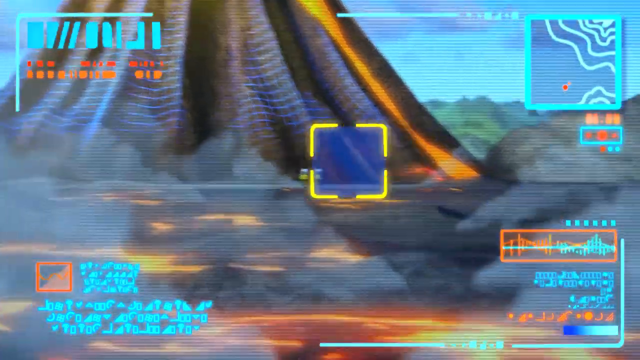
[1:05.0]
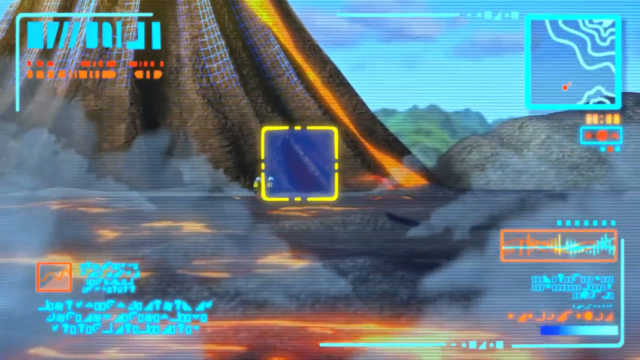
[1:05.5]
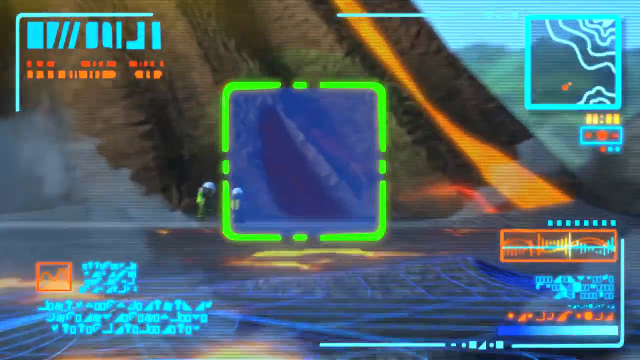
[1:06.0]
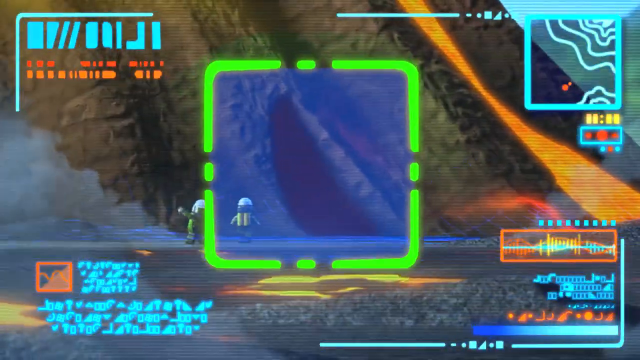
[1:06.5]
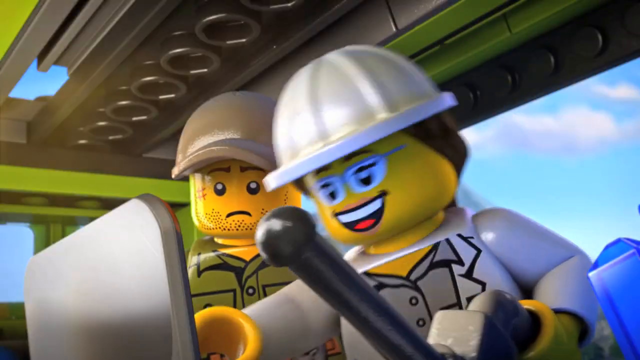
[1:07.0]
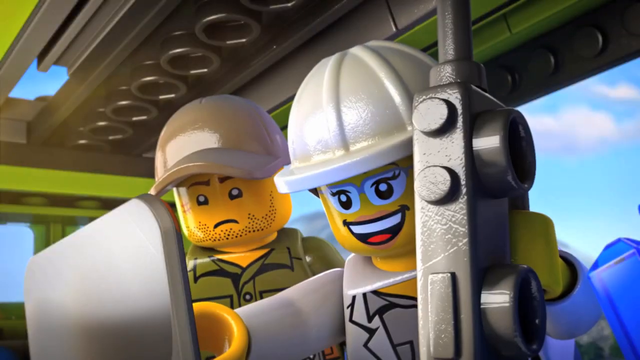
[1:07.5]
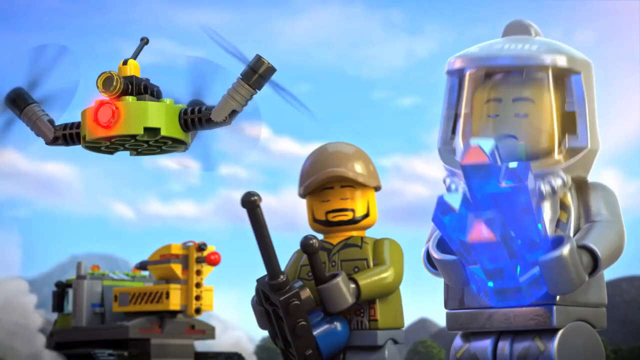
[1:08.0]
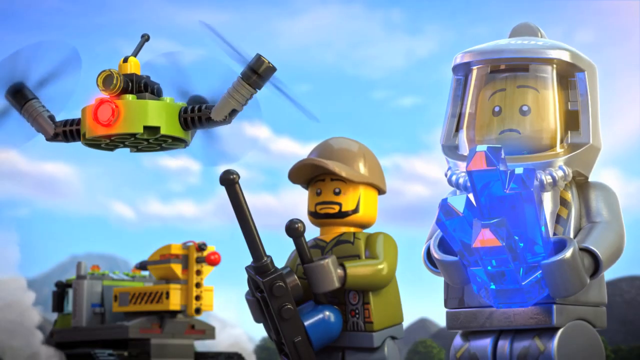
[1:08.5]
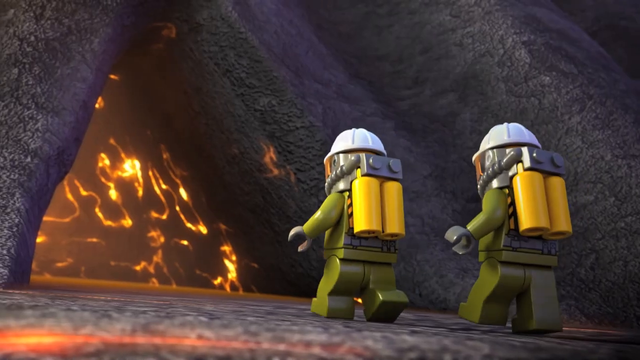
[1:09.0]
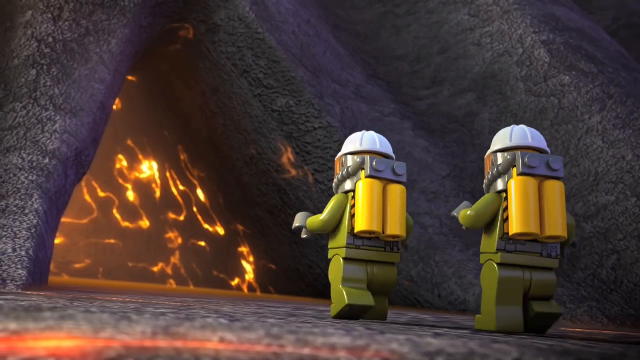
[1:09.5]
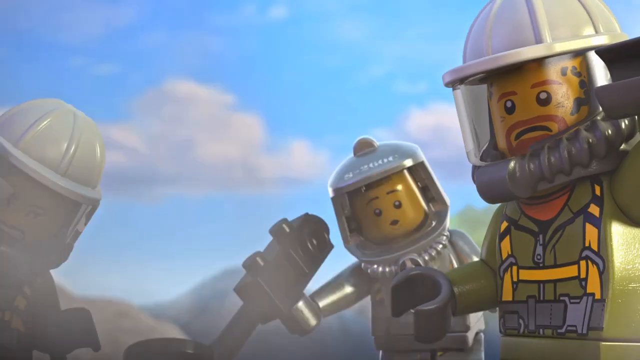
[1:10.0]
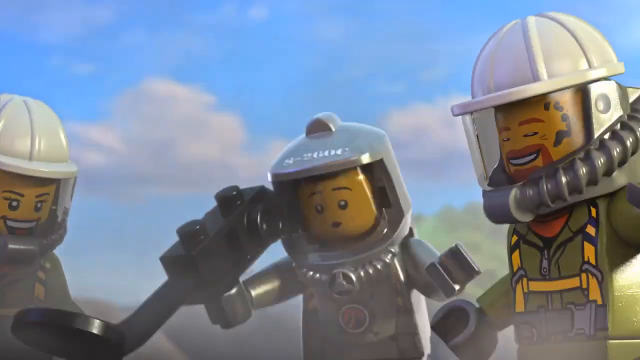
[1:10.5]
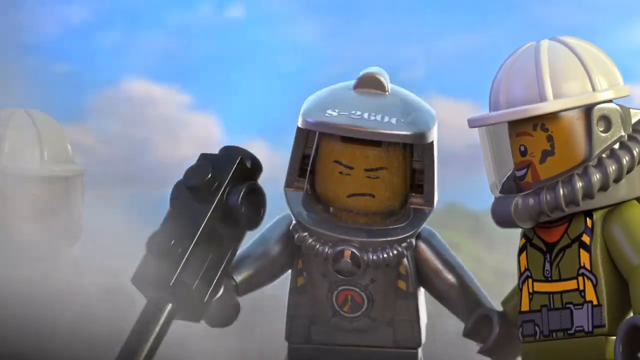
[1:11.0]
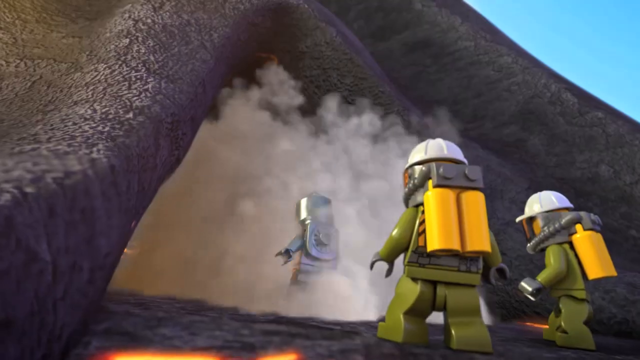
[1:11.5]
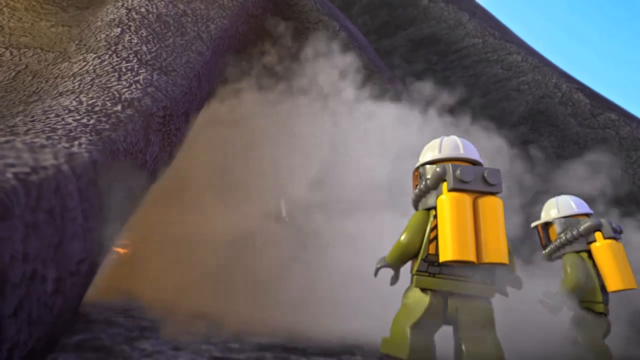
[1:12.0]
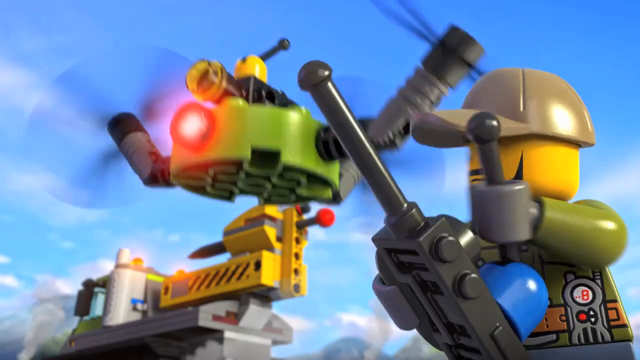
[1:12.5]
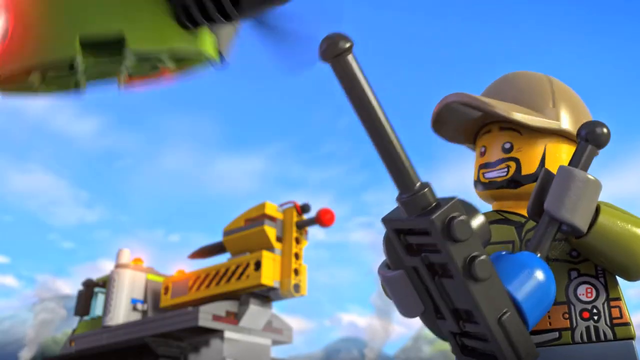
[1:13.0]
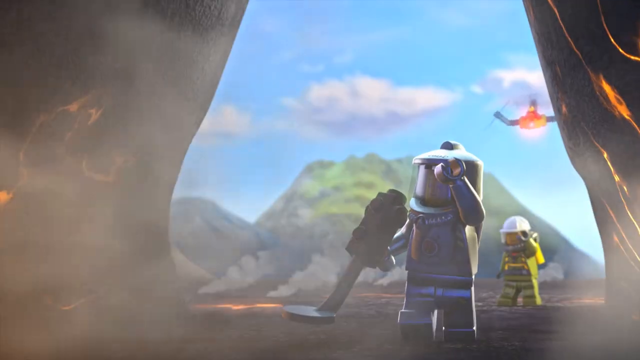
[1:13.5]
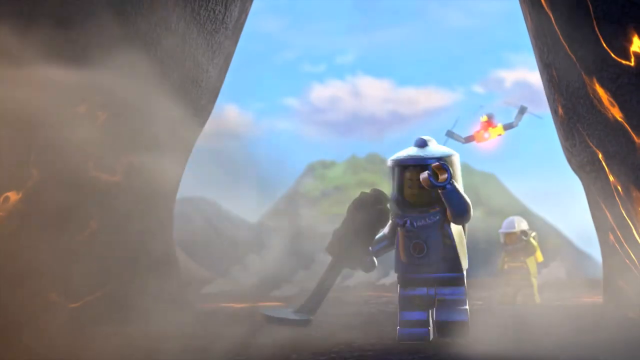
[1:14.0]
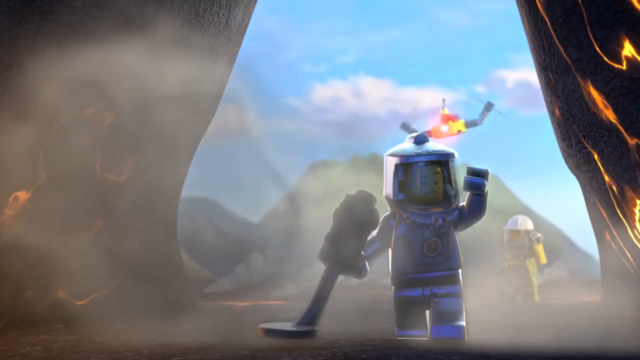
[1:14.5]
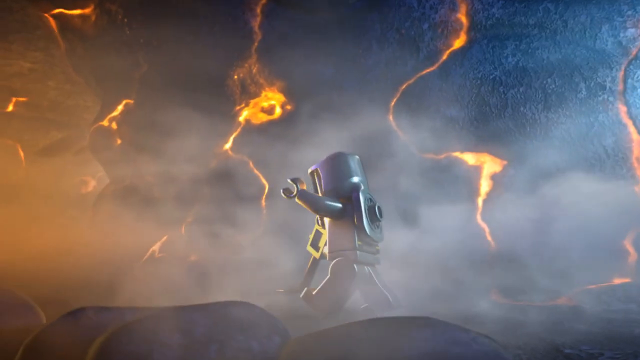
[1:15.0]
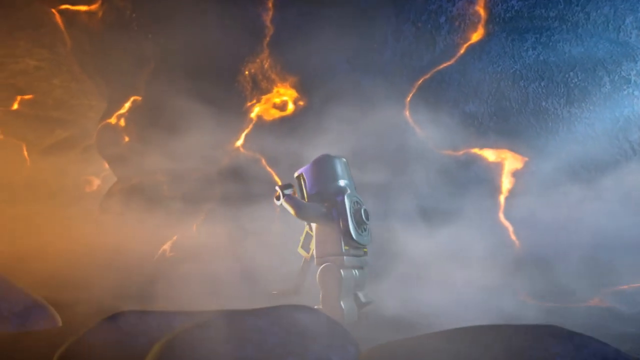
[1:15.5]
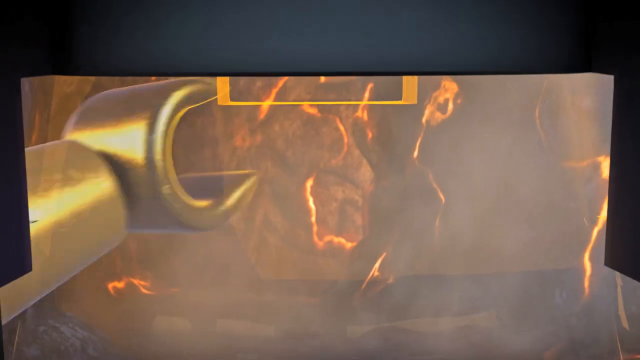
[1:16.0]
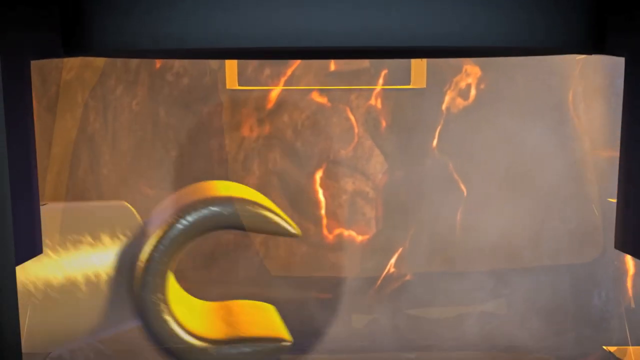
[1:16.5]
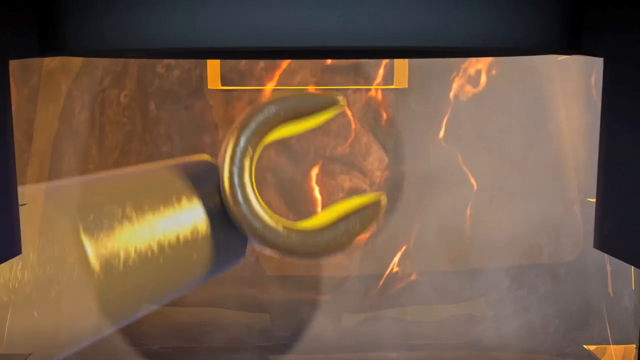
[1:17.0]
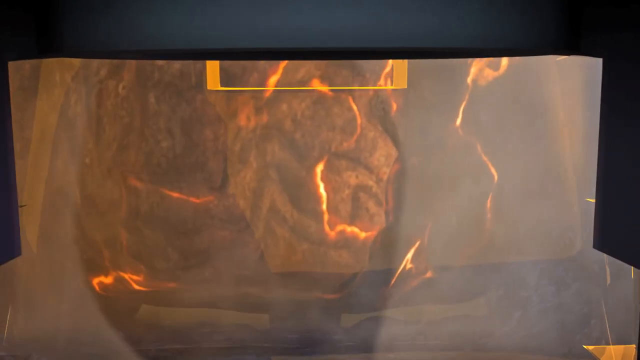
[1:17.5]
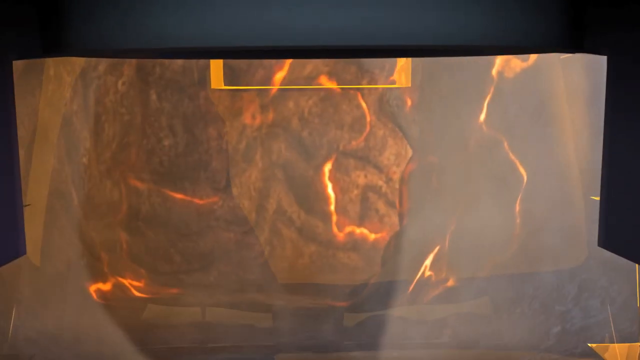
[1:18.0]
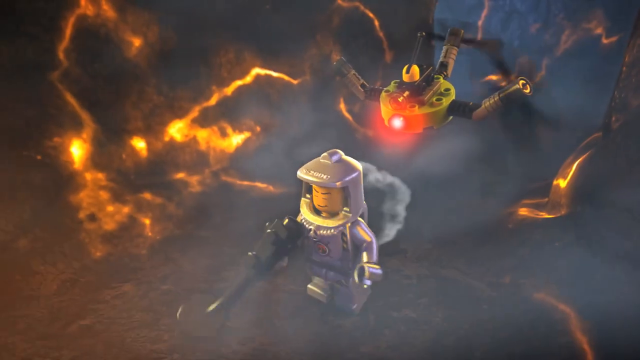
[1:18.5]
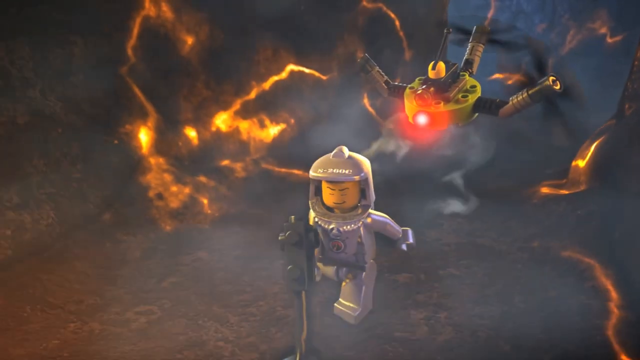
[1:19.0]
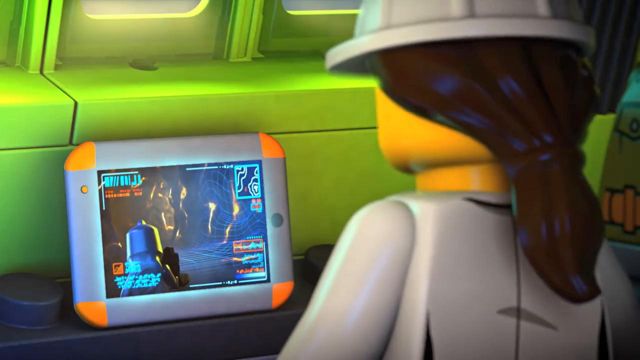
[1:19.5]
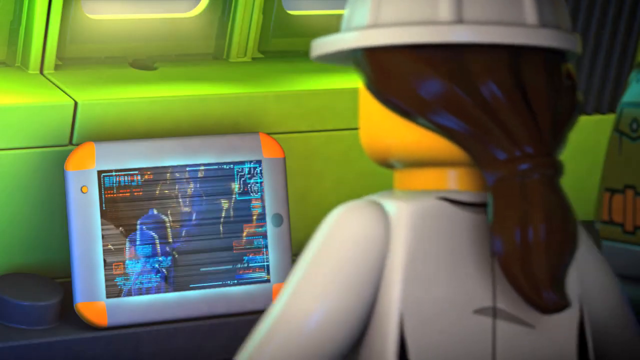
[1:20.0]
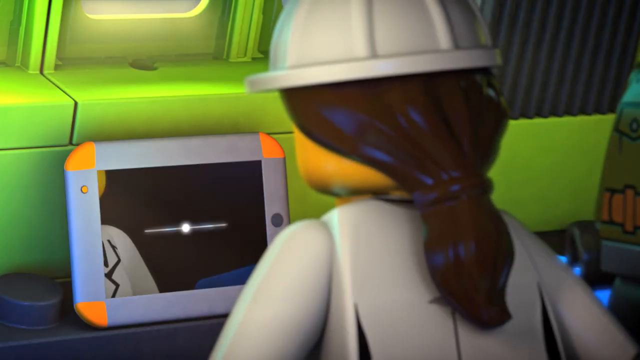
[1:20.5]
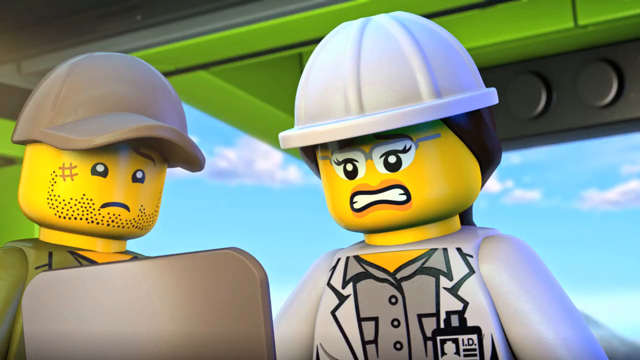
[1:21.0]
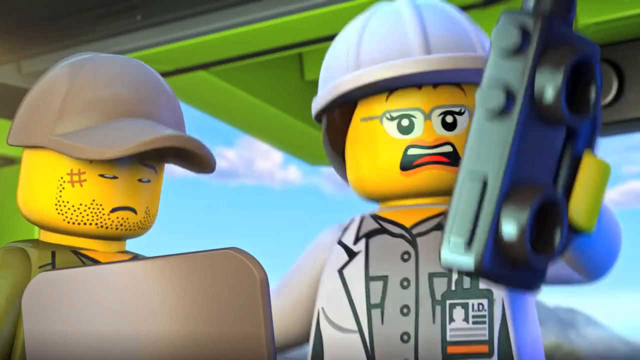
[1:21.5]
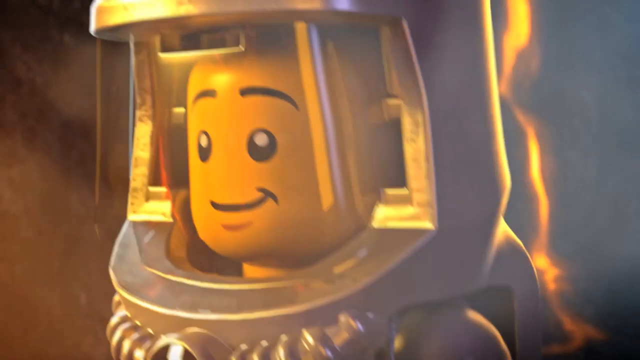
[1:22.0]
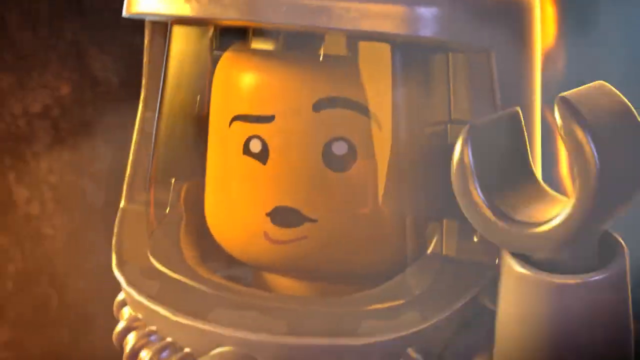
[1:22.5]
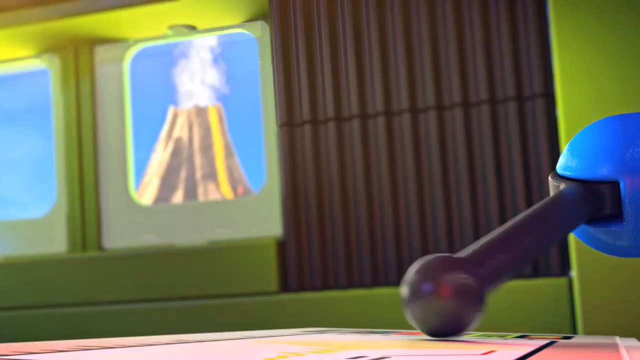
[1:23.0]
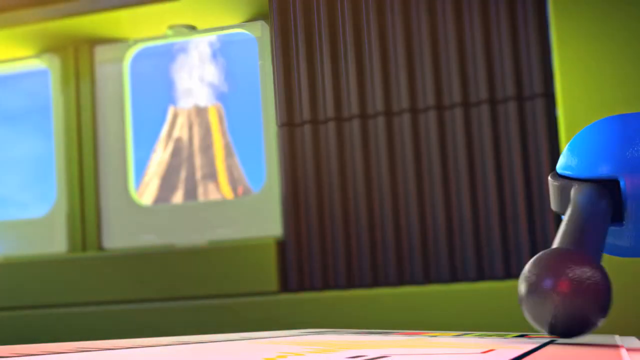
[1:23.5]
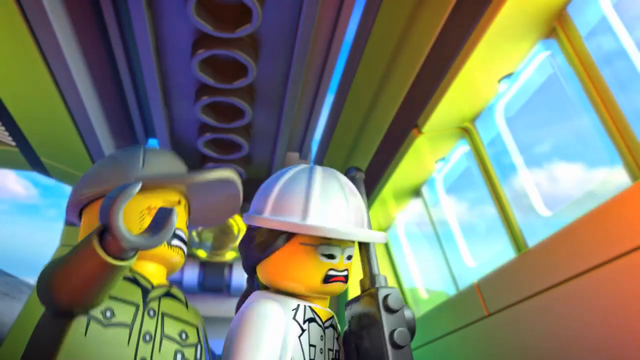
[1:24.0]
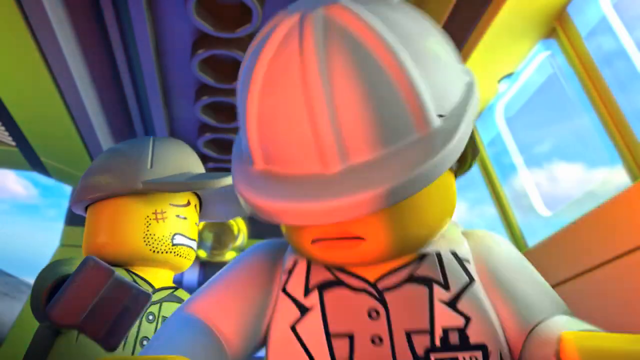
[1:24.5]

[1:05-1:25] Scientists look at the scans and report back over their walkie-talkies. Some little Lego men in green outfits wear a lot of protective equipment and appear to walk into a cave below or near a volcano. One of the little men pulls a lever as he talks on the radio. One Lego man walks inside the volcano, where it is very hot. He holds some sort of equipment in his hand that sends information back to the command center where the scientists are. The scientists are very worried as their screen cuts out, presumably because the heat caused the equipment to fail.